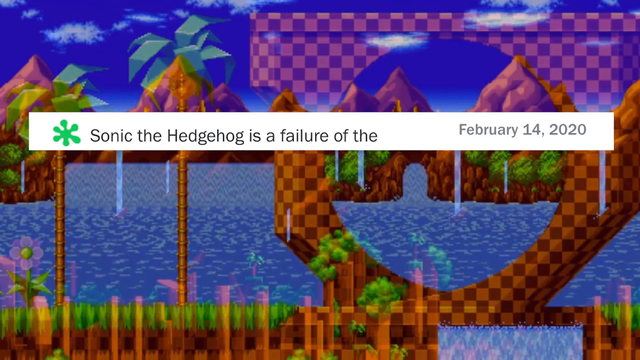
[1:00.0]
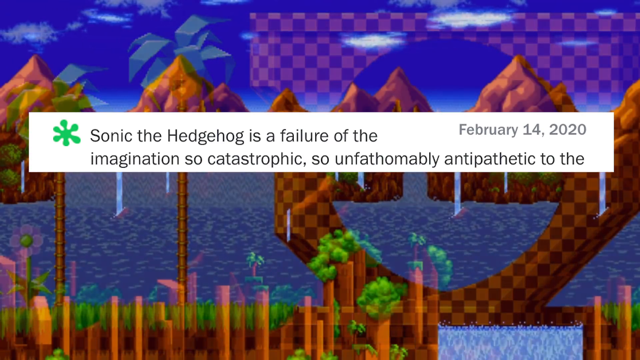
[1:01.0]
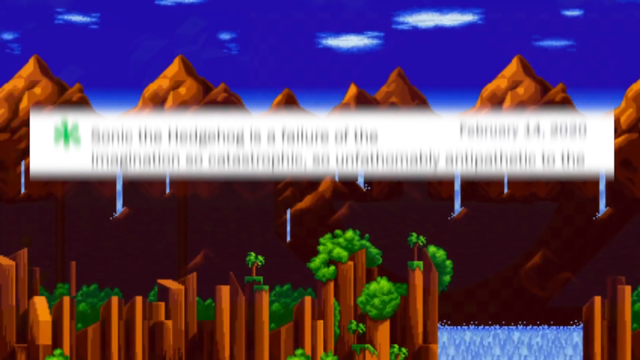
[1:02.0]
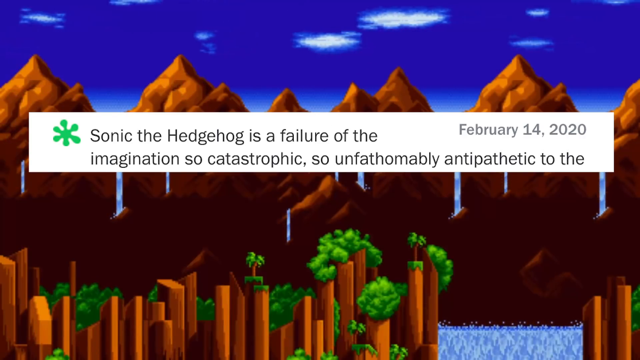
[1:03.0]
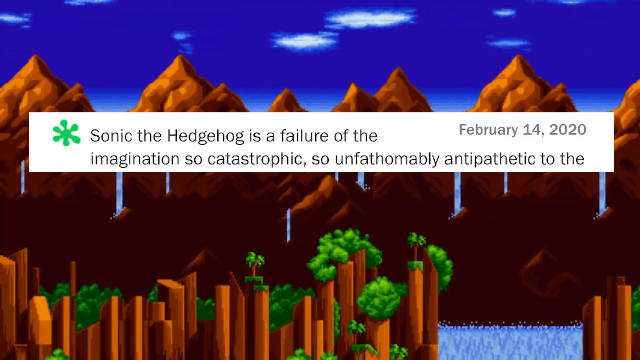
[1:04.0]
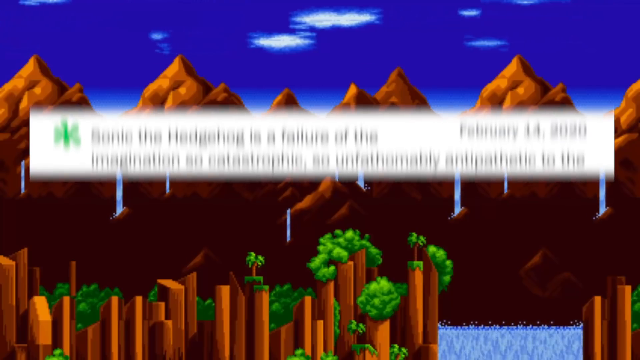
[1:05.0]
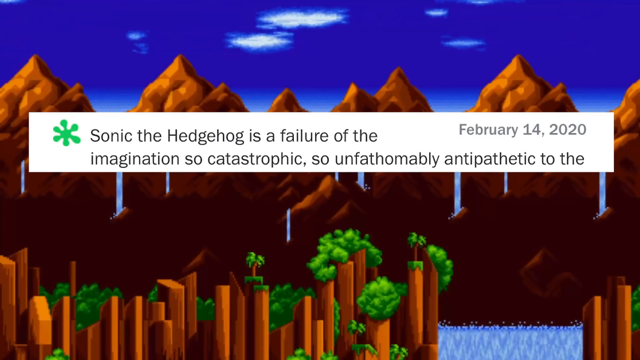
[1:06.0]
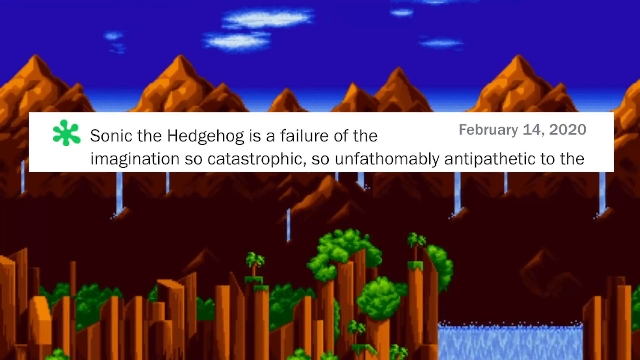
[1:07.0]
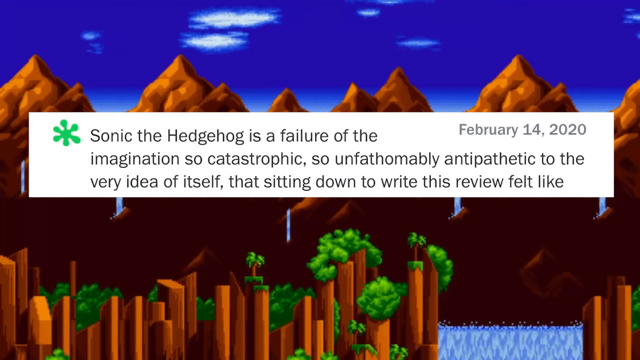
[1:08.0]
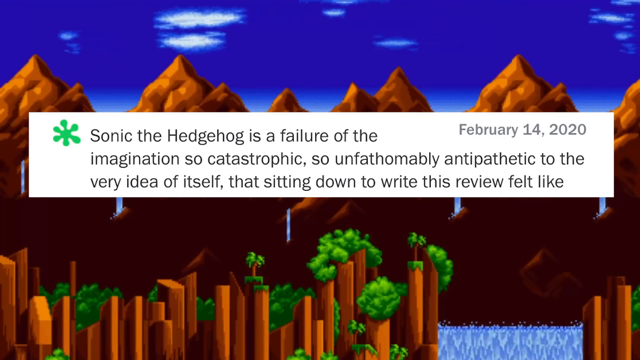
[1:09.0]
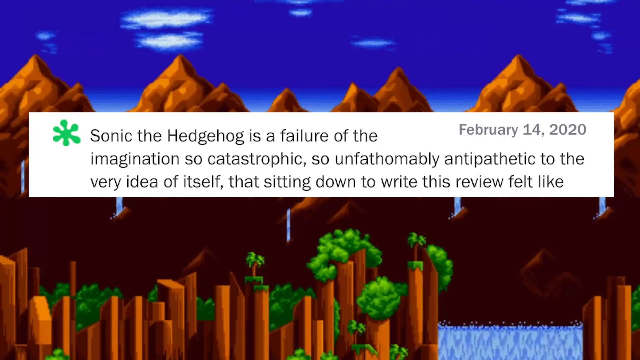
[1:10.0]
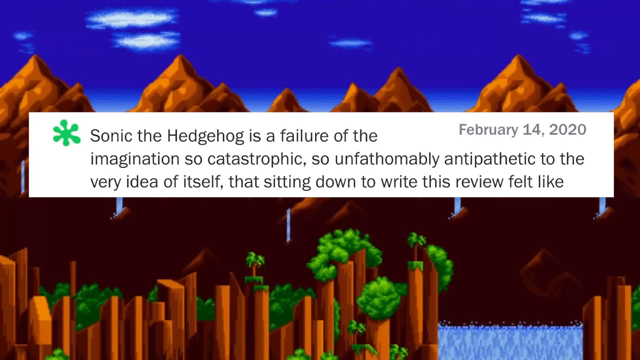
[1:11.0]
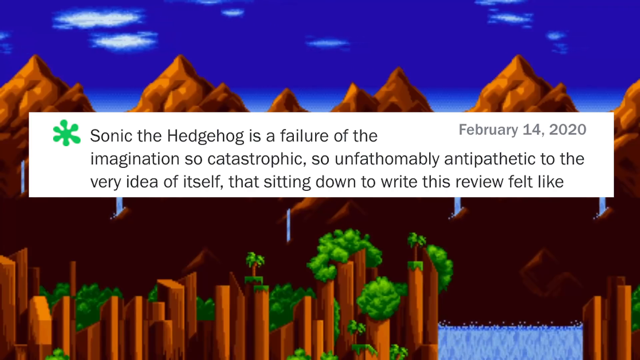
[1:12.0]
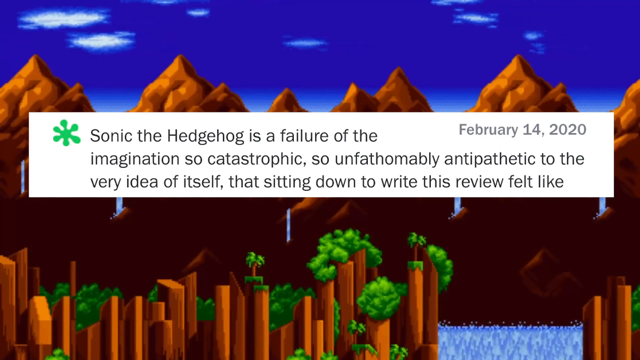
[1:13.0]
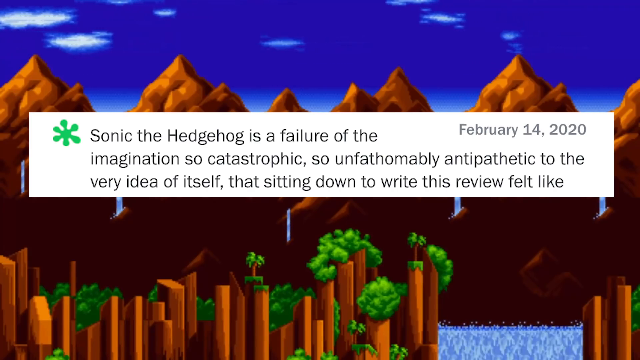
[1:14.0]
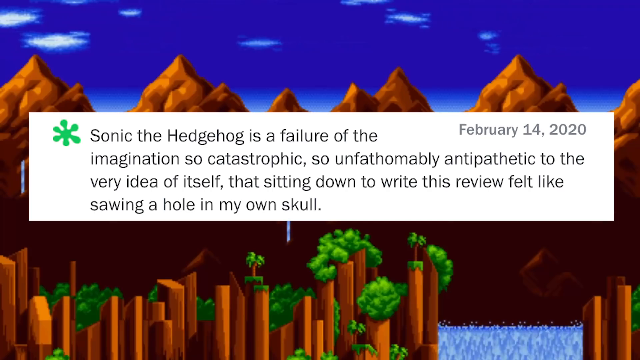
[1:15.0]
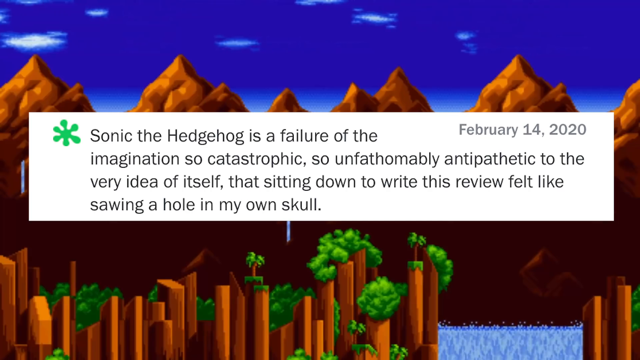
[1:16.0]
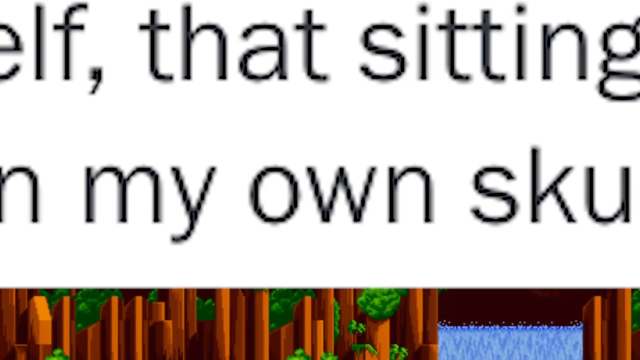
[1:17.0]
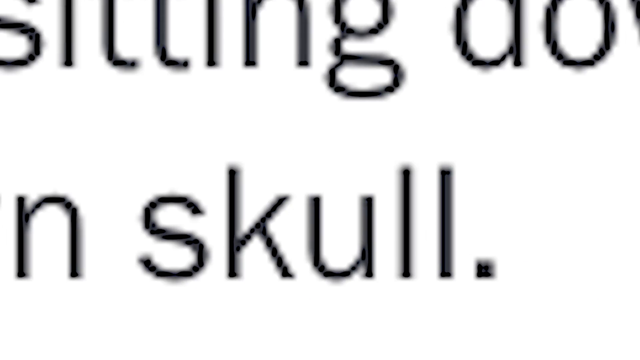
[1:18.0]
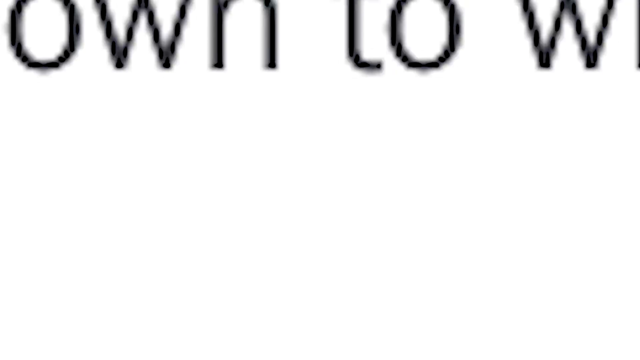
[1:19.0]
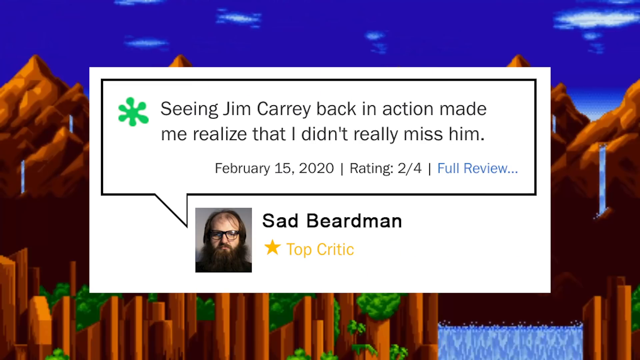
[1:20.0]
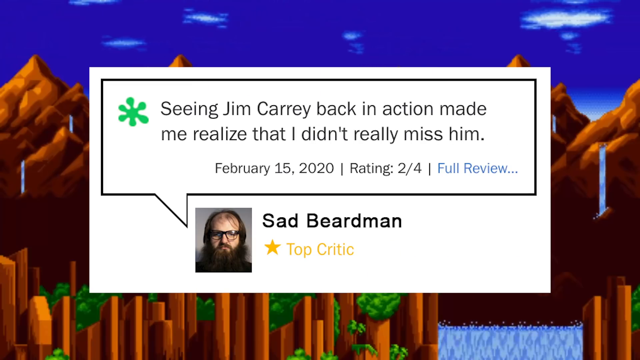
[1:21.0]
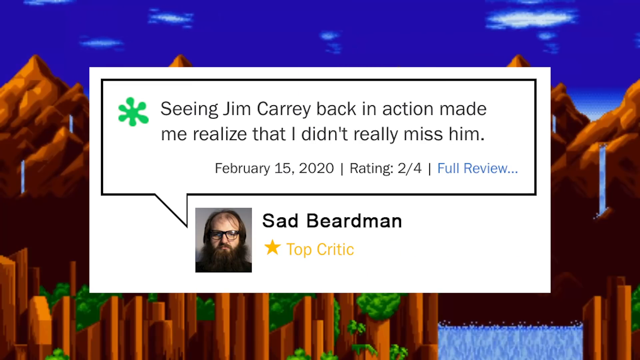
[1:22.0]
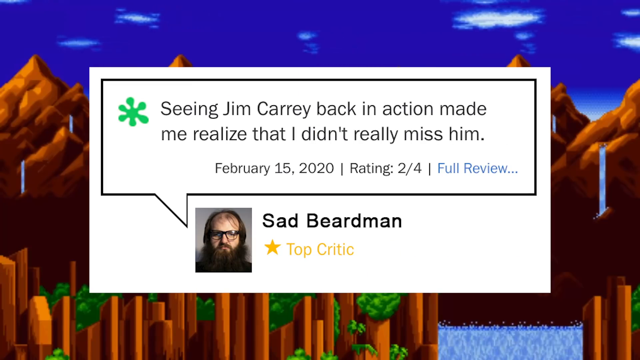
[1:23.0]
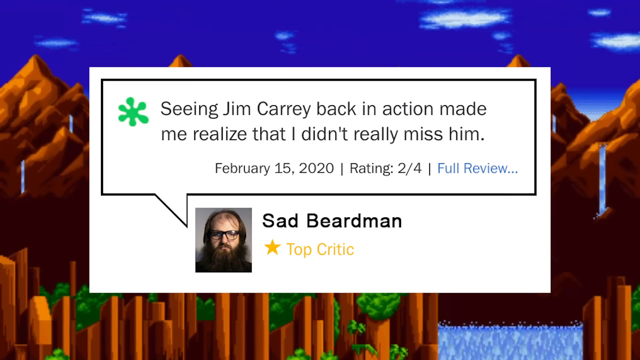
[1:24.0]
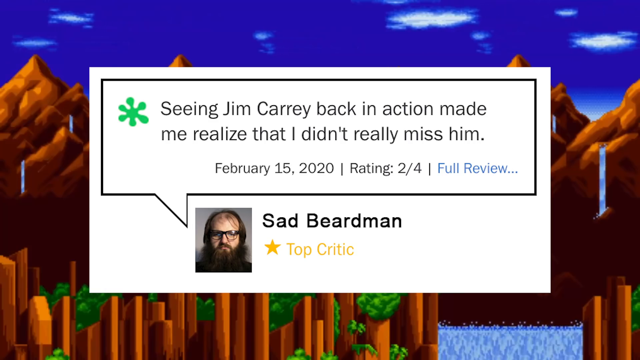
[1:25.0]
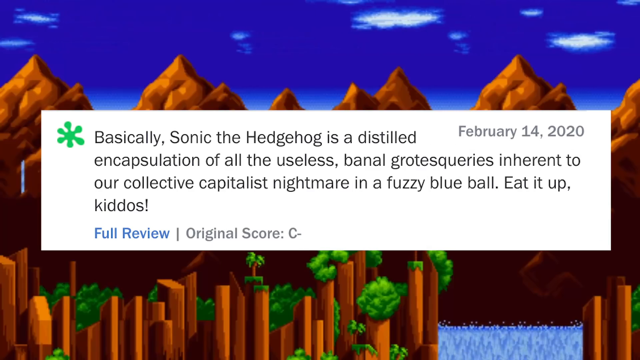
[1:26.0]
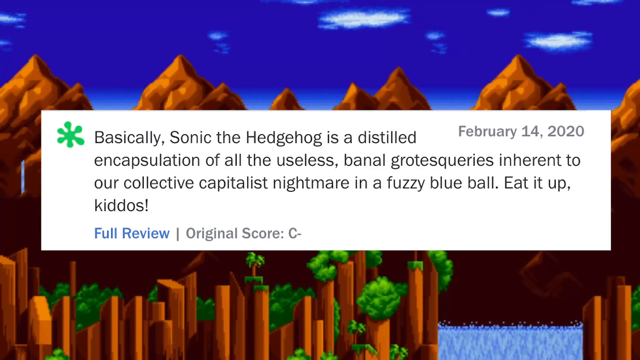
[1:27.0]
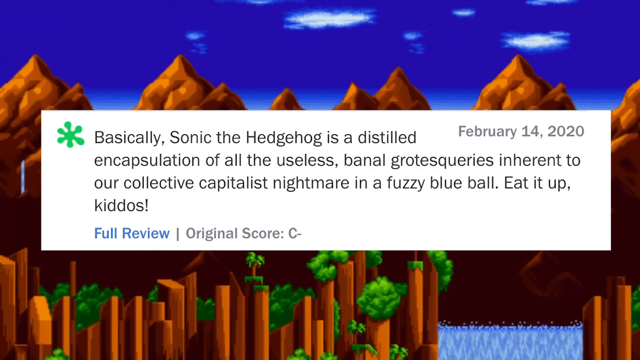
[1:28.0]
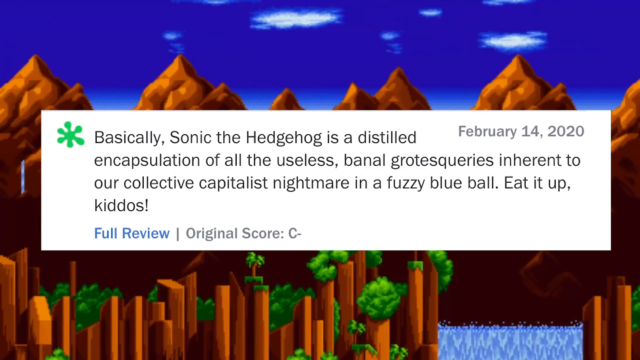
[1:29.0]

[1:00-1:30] The next review loads gradually and is dated 14th of February, 2020. There is a new backdrop: a waterfall in the bottom right-hand corner, various jungle-type trees amongst some jagged rocks, mountains in the background, and wispy clouds moving across the screen in the background. The animation covers the waterfall and the clouds. Once the review has finished loading, it says: "Sonic the Hedgehog is a failure of the imagination, so catastrophic, so unfathomably antipathetic to the very idea of itself that sitting down to write this review felt like sawing a hole in my own skull." The video then zooms in extremely on the word "skull". Next is a review from a named critic, Sad Beard Man, who on February 15th, 2020 stated: "seeing Jim Carrey back in action made me realize that I didn't really miss him," giving it two out of four.